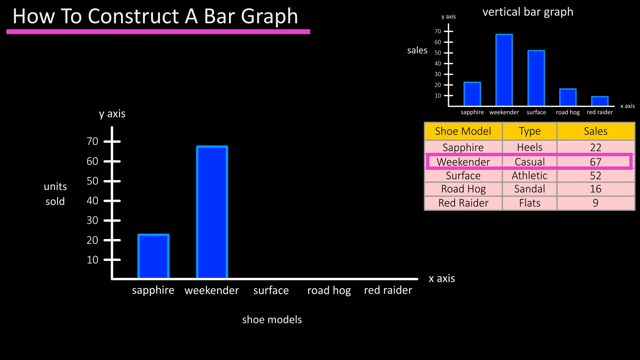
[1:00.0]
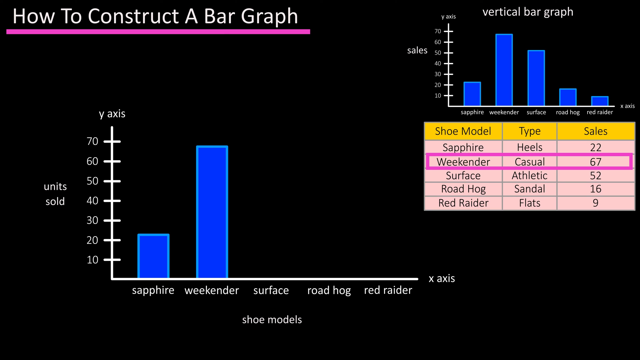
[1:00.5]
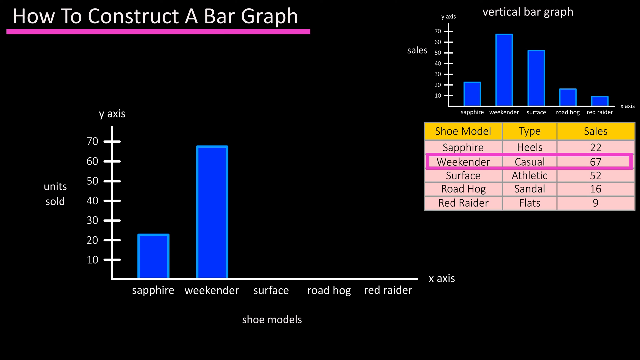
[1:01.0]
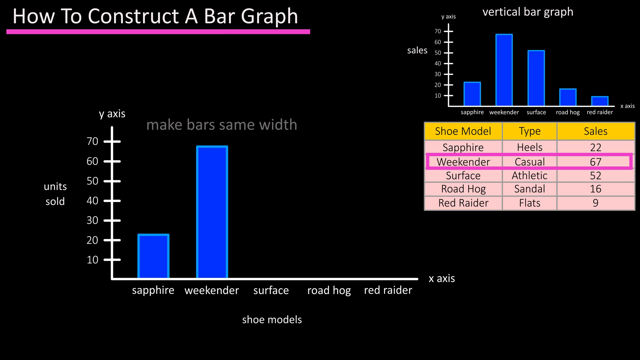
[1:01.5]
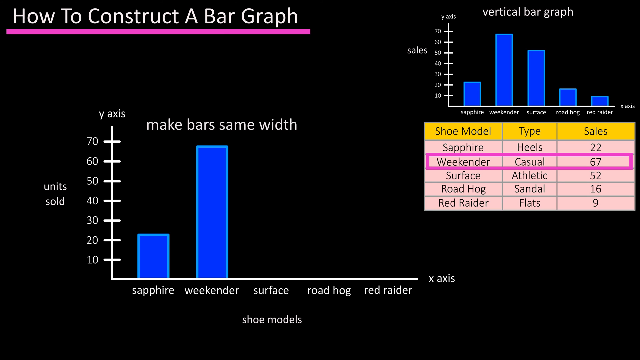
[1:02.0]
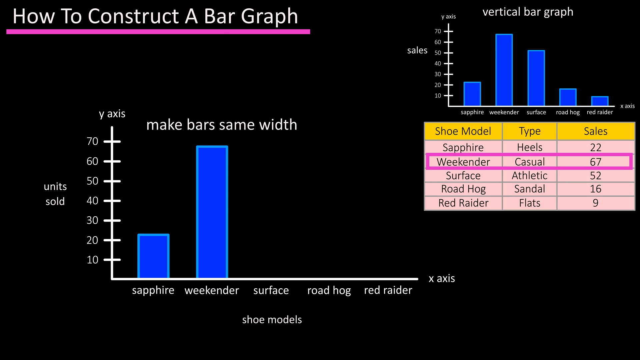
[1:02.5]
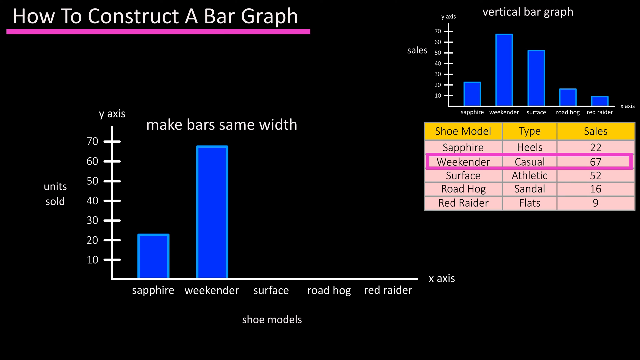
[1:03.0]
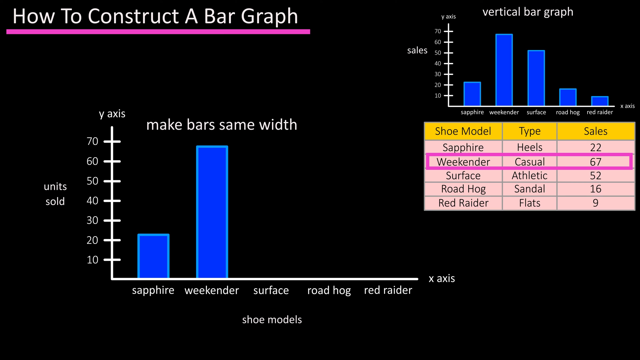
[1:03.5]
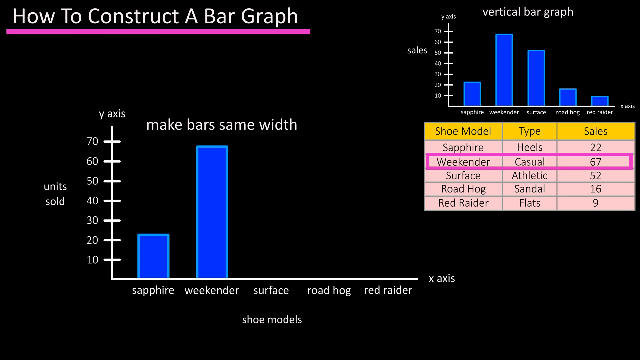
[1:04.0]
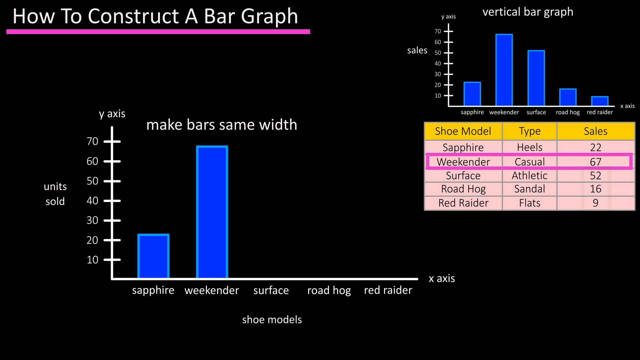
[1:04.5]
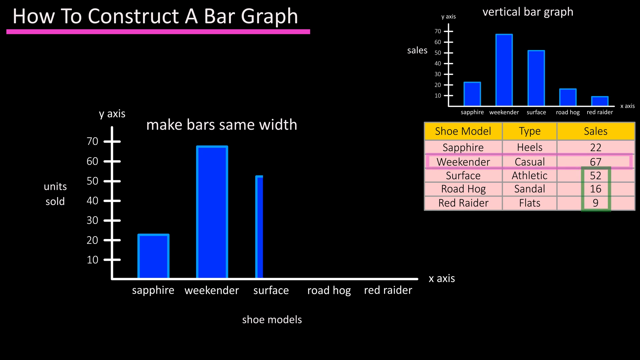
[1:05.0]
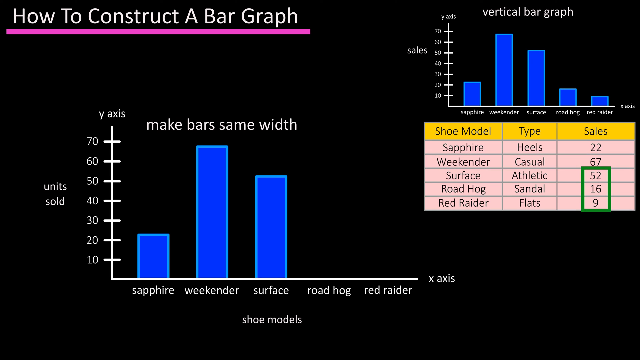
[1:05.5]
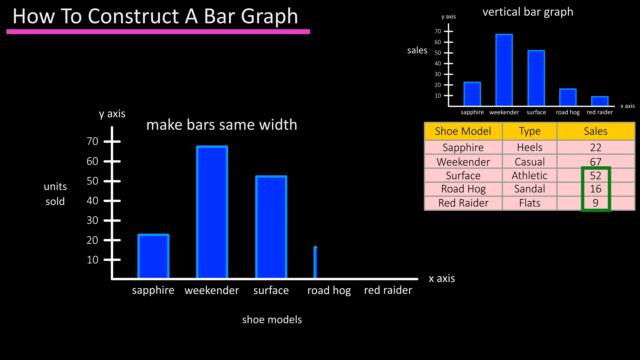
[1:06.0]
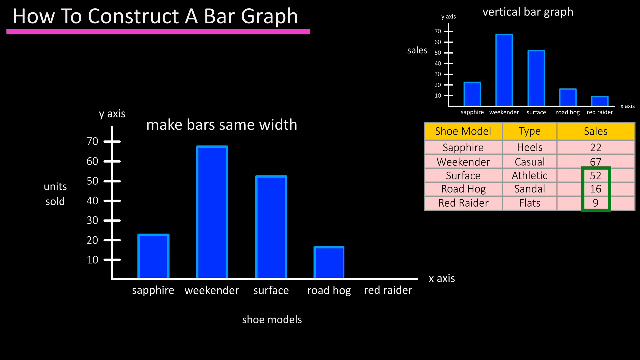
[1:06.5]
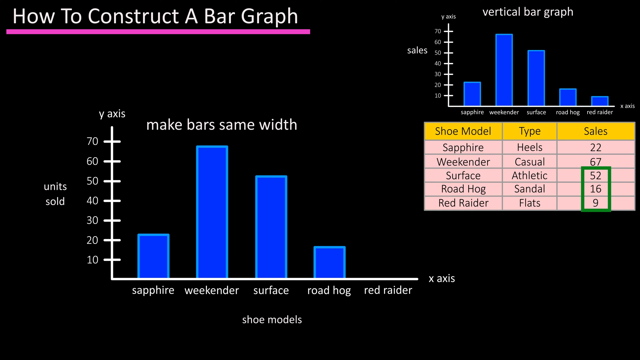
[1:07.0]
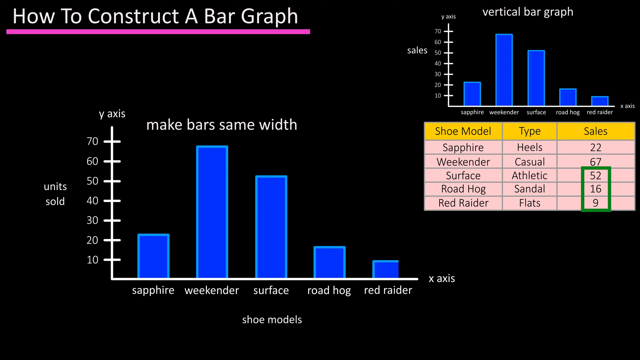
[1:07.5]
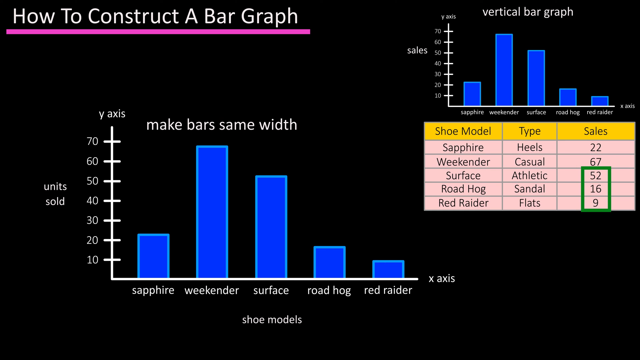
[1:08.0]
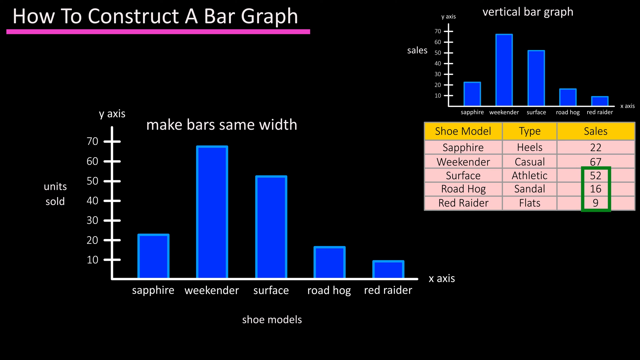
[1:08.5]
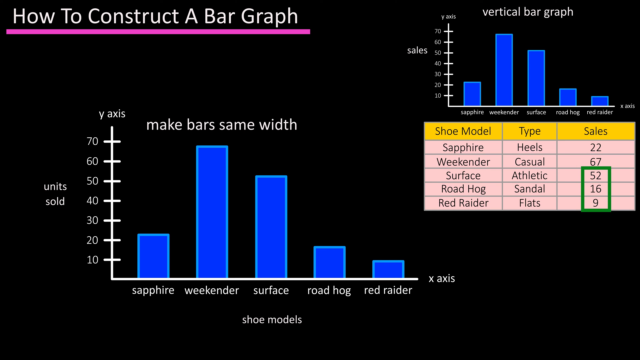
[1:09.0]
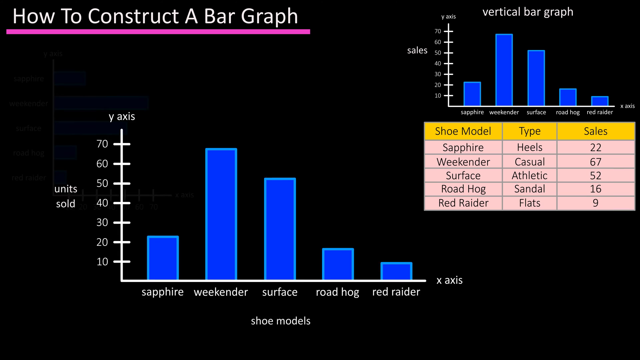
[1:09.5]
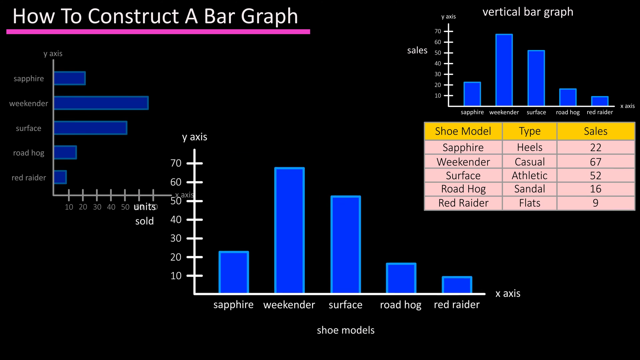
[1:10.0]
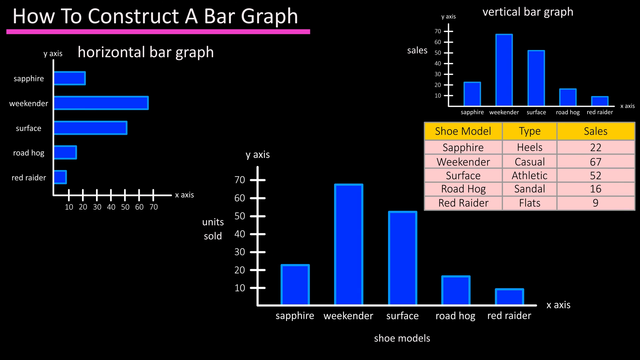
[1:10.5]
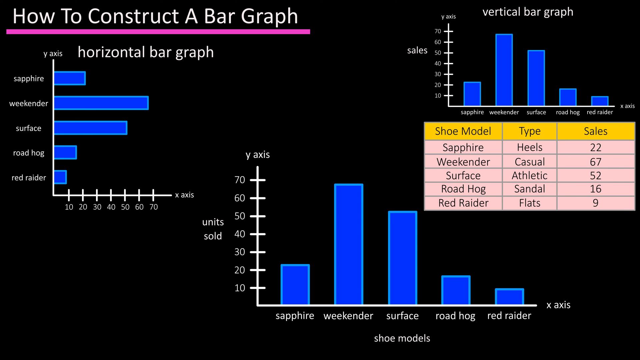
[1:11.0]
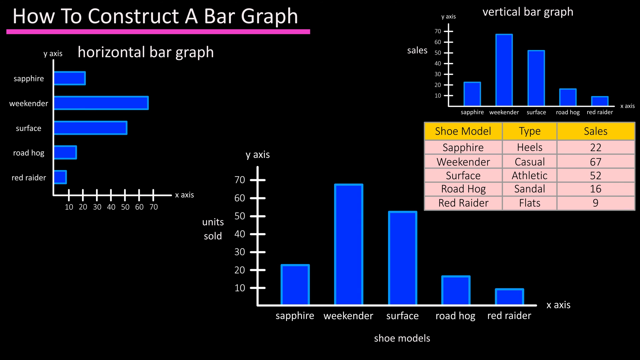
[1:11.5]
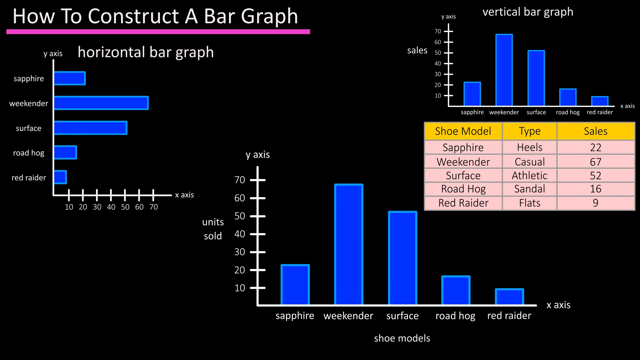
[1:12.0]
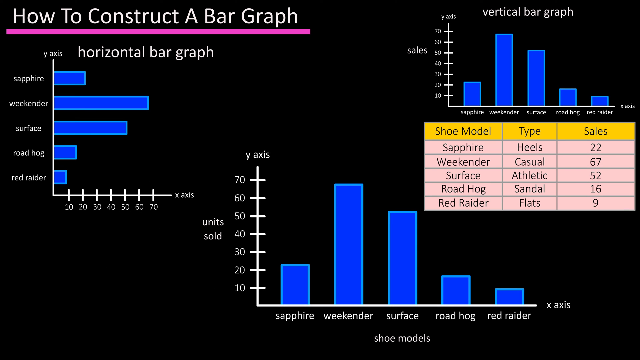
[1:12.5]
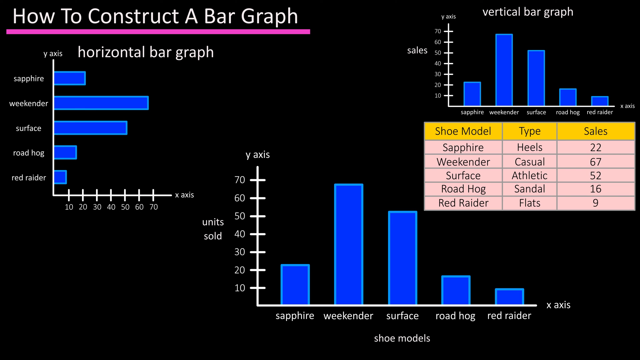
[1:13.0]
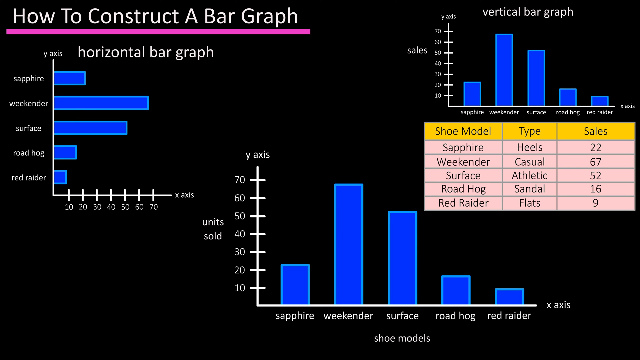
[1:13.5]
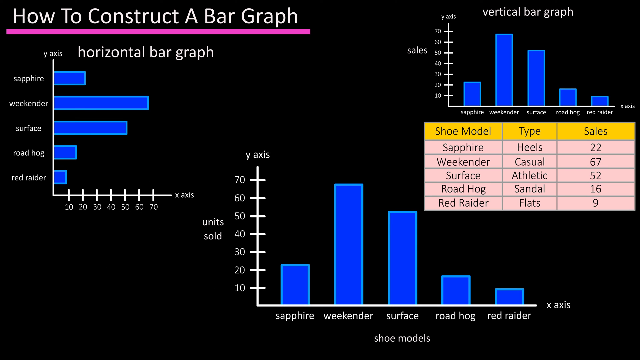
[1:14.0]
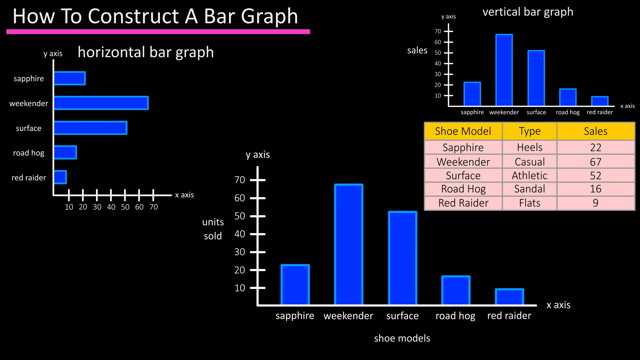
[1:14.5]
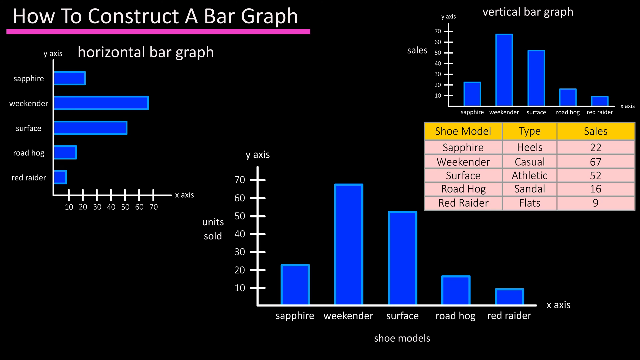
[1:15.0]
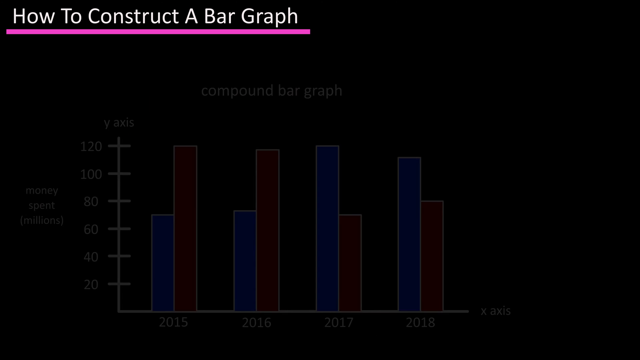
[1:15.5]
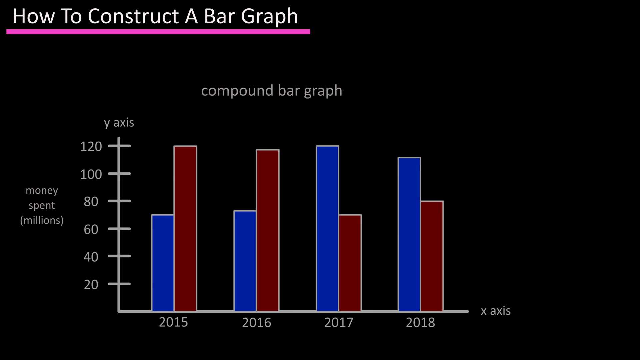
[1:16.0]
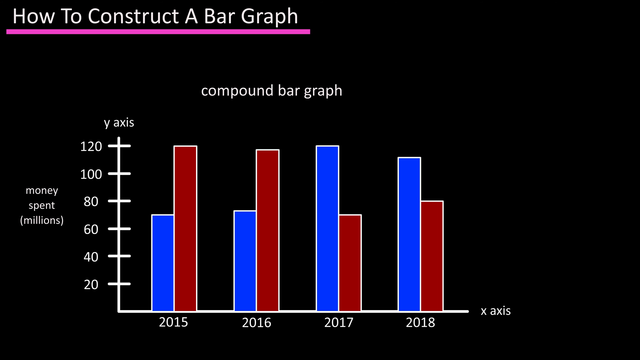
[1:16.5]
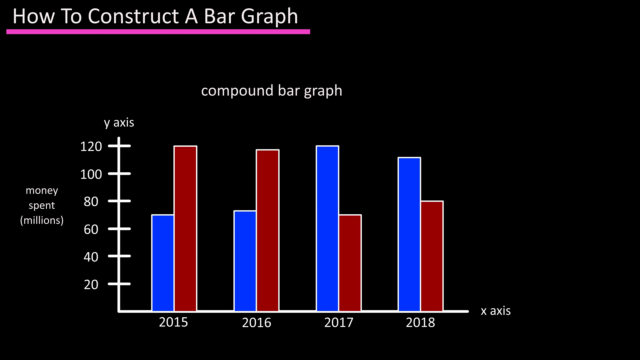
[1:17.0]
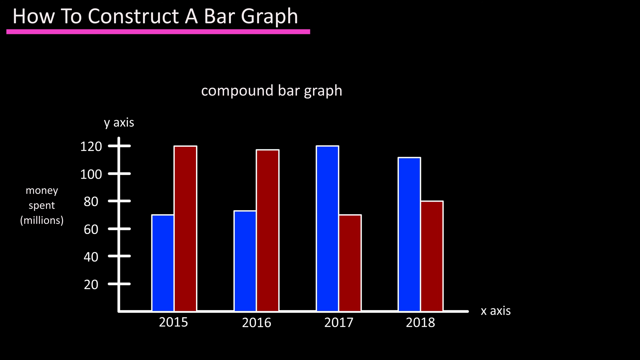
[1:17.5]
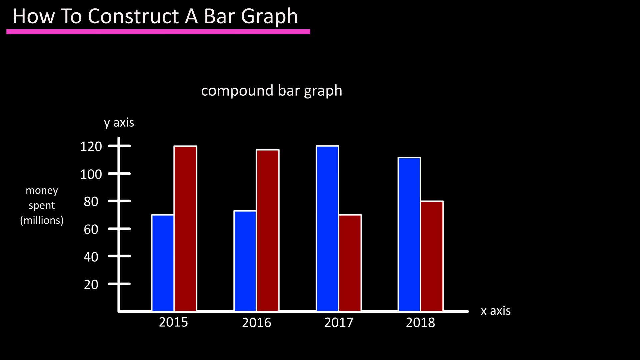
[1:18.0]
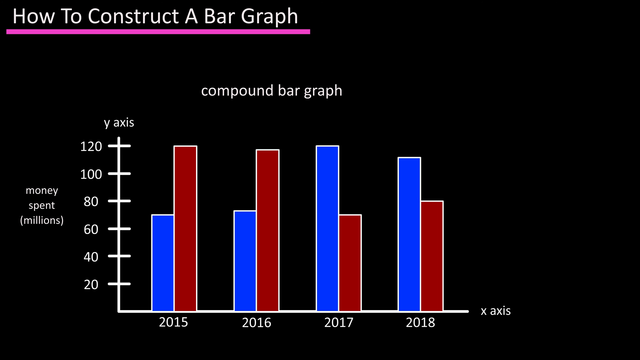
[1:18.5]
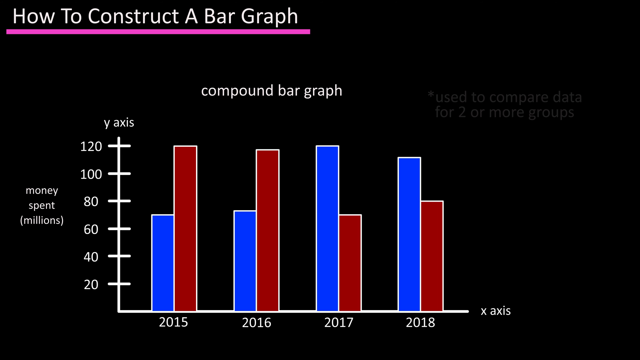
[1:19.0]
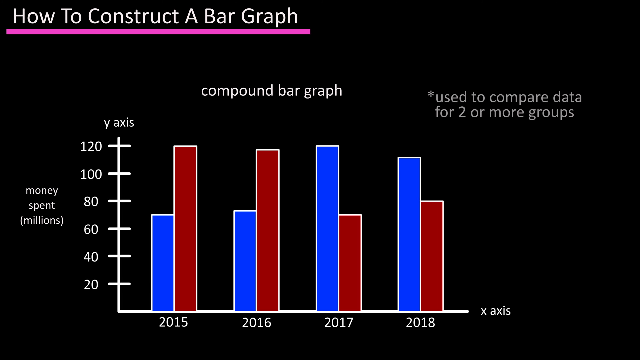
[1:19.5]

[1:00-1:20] The pictures change quickly. The video starts by showing all three depictions: an x-axis and y-axis being populated, a vertical bar graph already populated with bars in the far right corner, and underneath it the shoe model, type and sales information. That disappears and just horizontal bar graphs are shown; when completed, the bars have different heights representing the sales but a consistent width. A compound bar graph is then shown very quickly. That disappears and the original three depictions return: the constructed bar graph takes up most of the screen, showing two bars, the Sapphire bar and the Weekender bar, with the completed bar graph in the far right-hand corner and all the information underneath it.